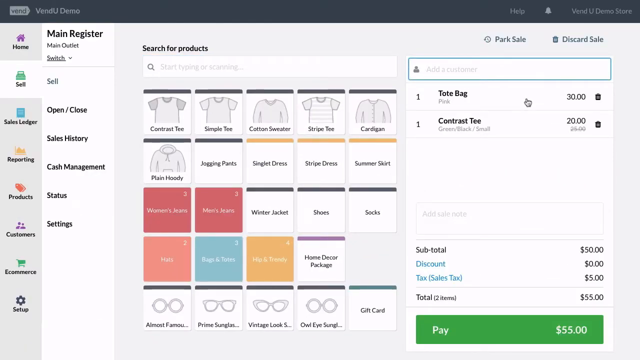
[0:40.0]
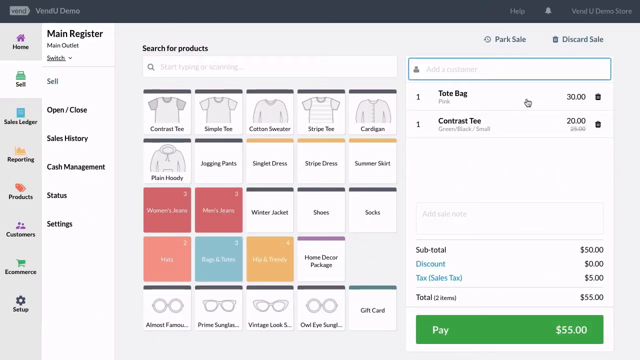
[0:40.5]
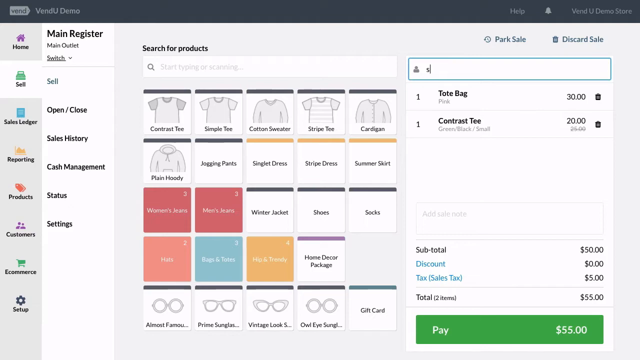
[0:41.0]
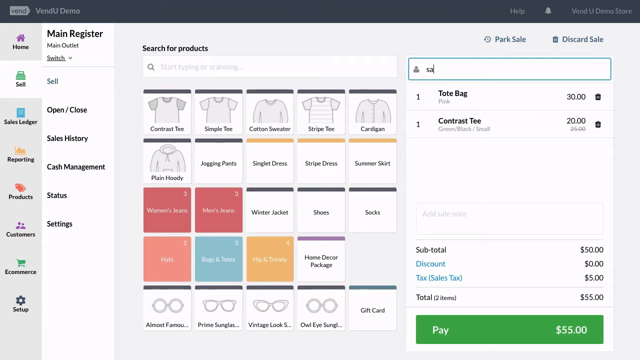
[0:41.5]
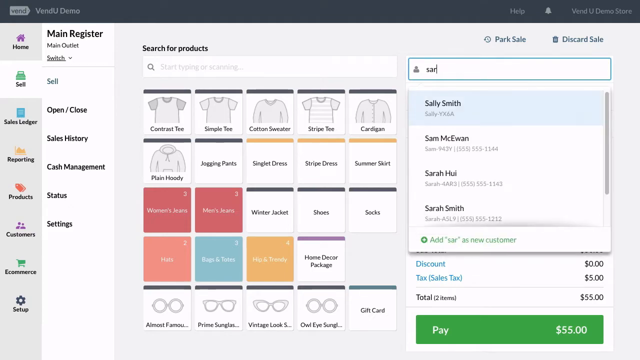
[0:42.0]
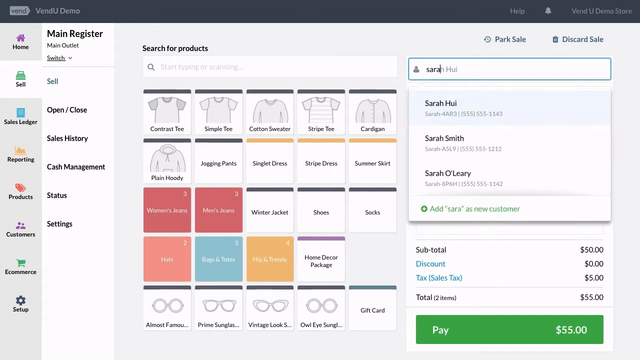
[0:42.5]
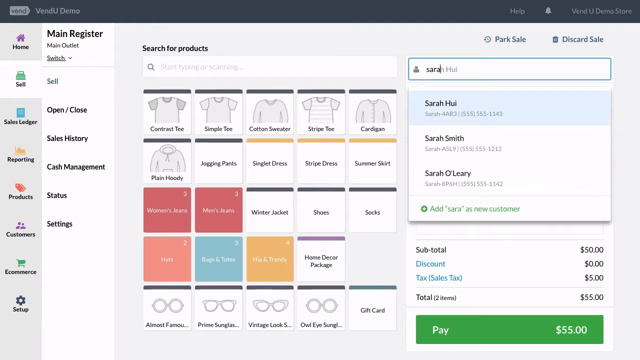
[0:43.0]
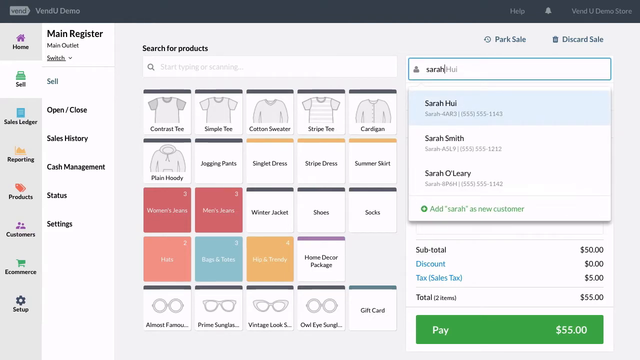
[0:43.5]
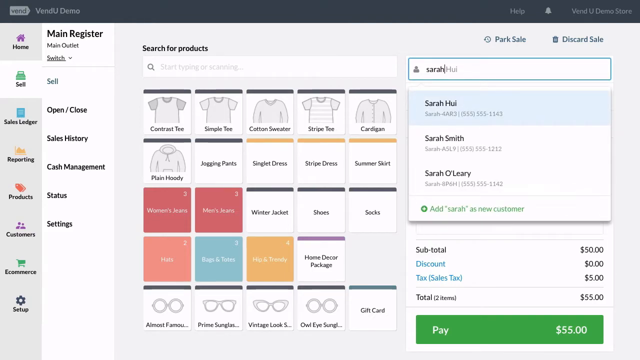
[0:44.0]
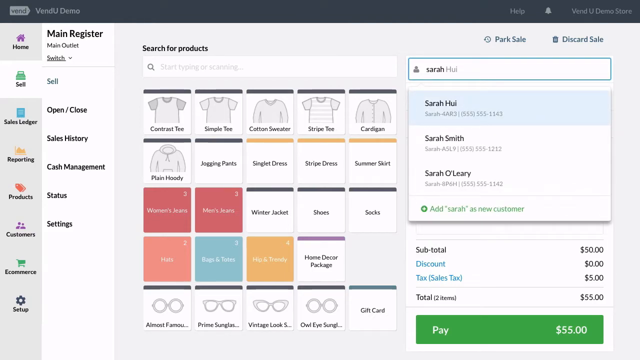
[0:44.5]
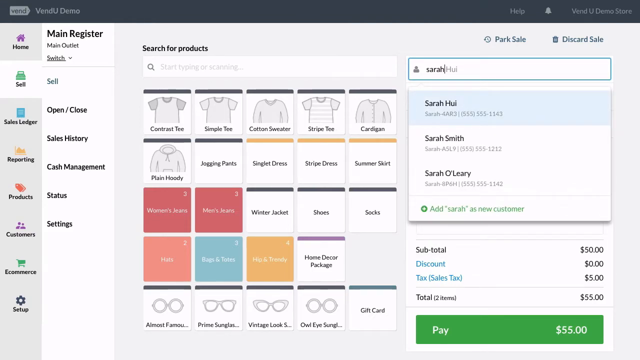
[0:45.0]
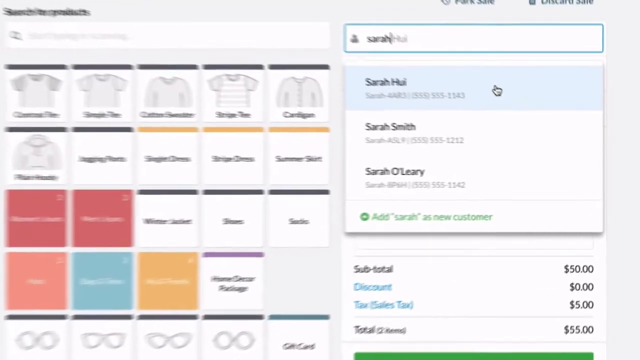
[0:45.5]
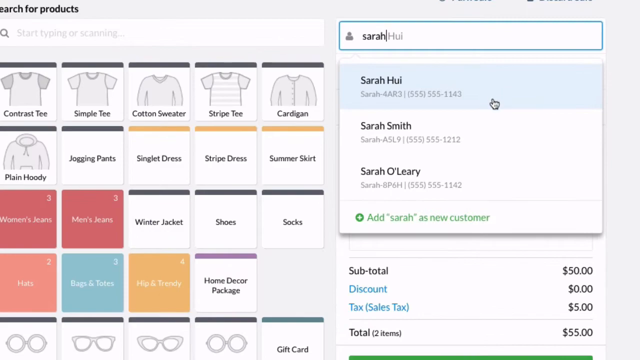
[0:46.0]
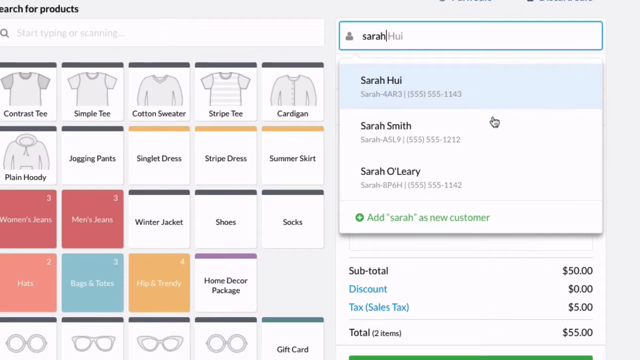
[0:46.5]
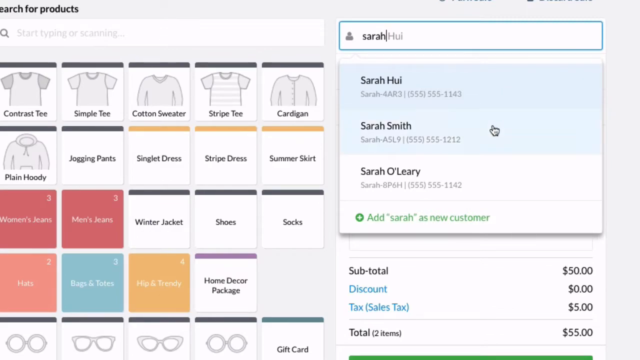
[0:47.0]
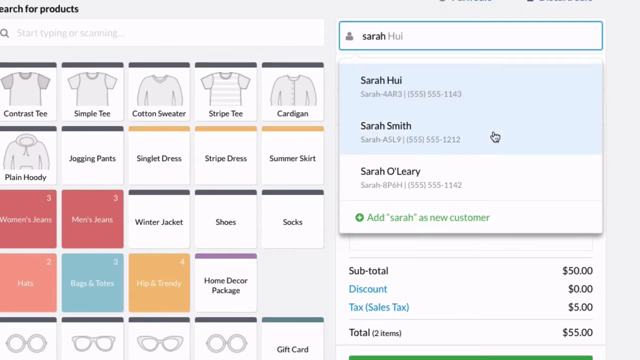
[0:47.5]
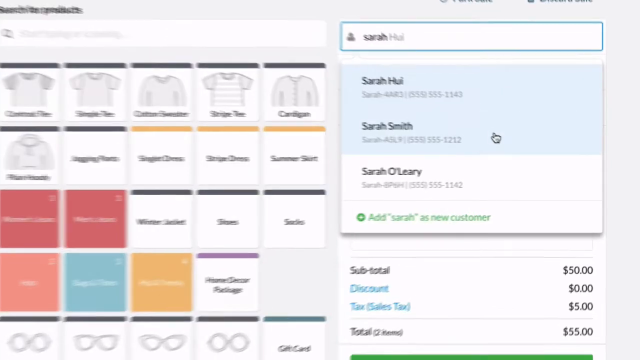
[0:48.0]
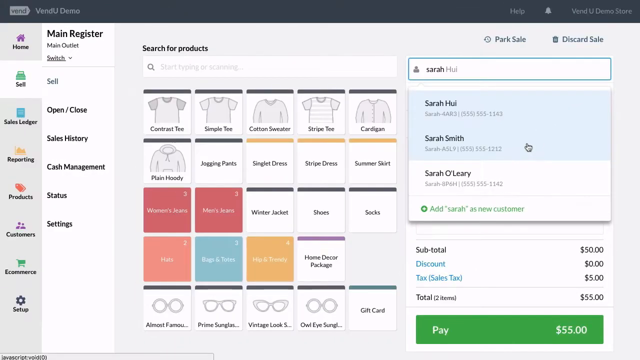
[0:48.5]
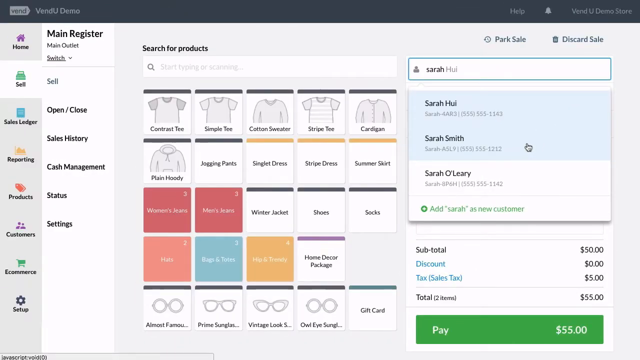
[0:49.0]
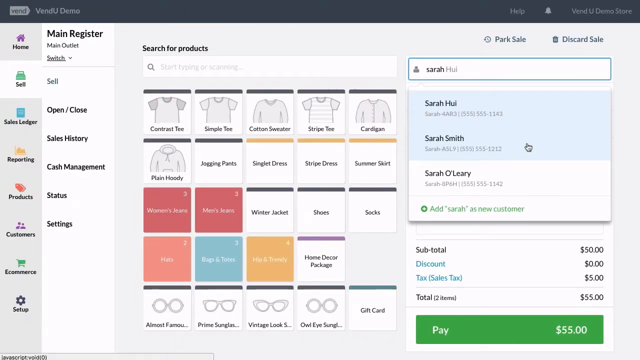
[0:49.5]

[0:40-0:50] On a page of customer information, the name Sarah is typed and Sarah Smith pops up, along with two other Sarahs, Sarah Henry and Sarah O'Neill. Sarah Smith is clicked, and her background and order information pops up in a table. Different types of dresses in black and white are shown, as well as a jacket with drawn ties.